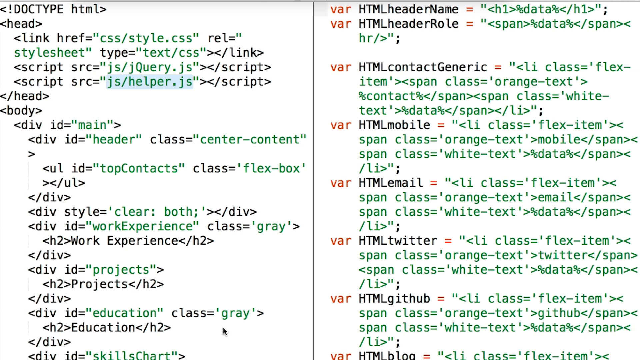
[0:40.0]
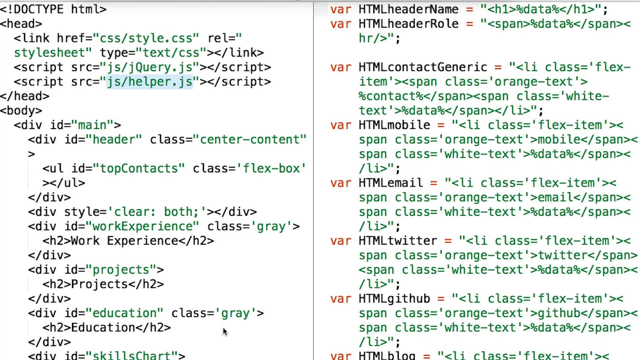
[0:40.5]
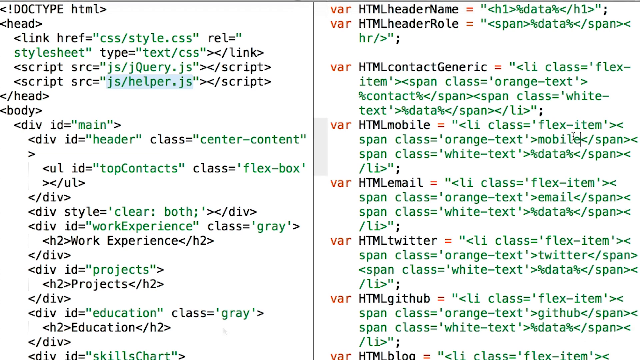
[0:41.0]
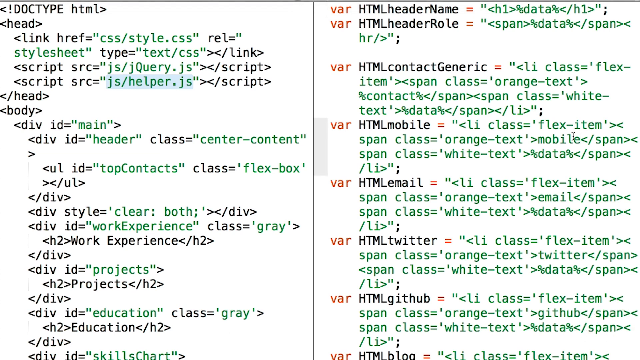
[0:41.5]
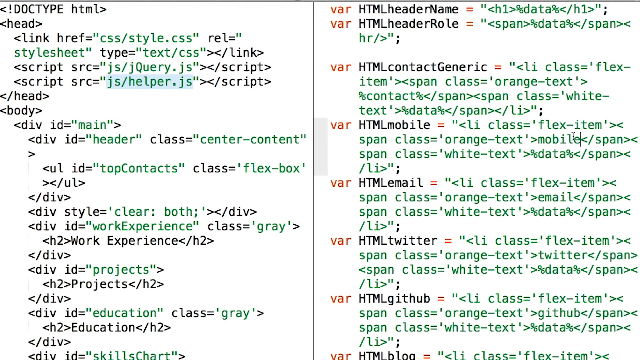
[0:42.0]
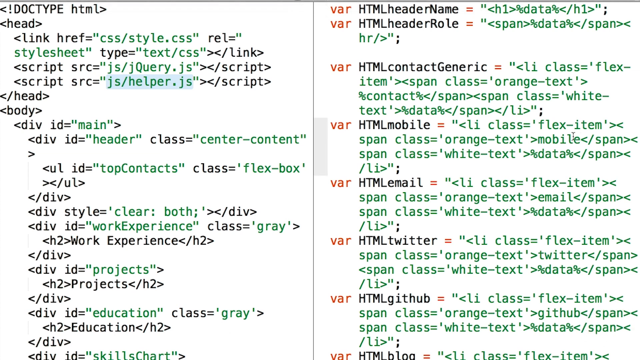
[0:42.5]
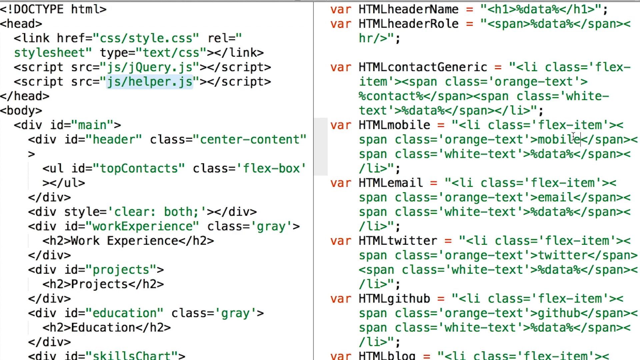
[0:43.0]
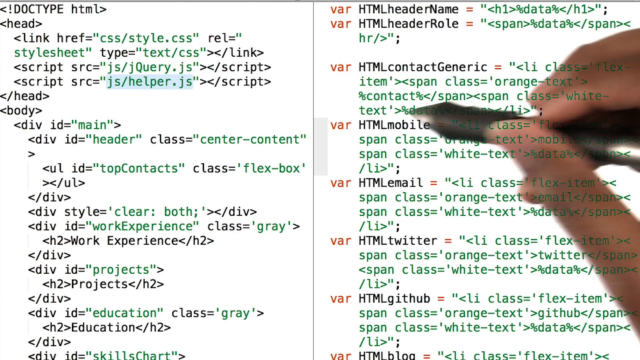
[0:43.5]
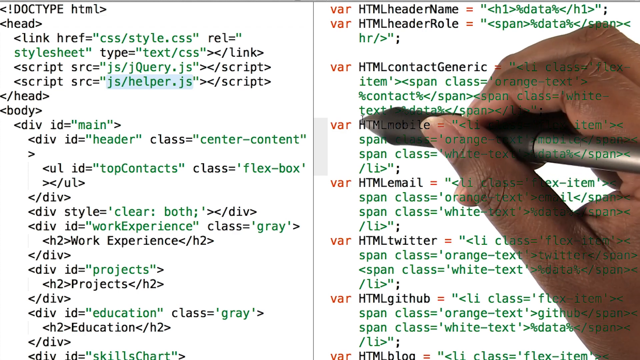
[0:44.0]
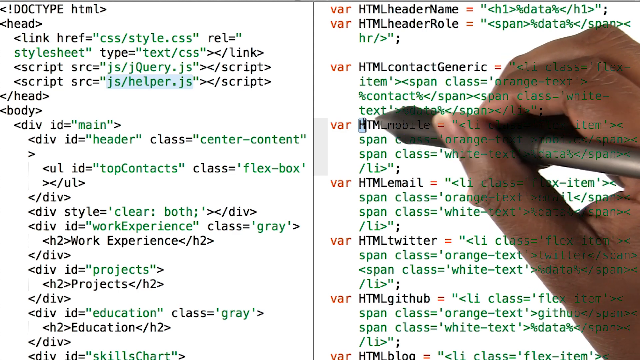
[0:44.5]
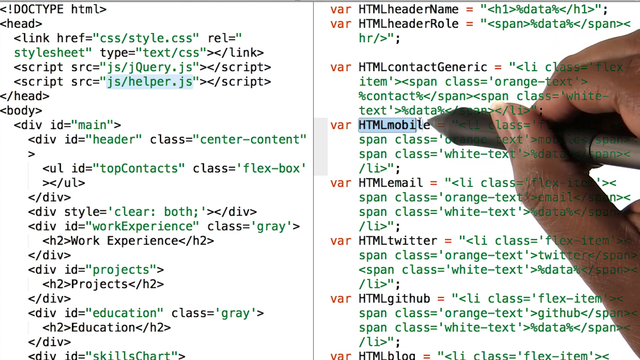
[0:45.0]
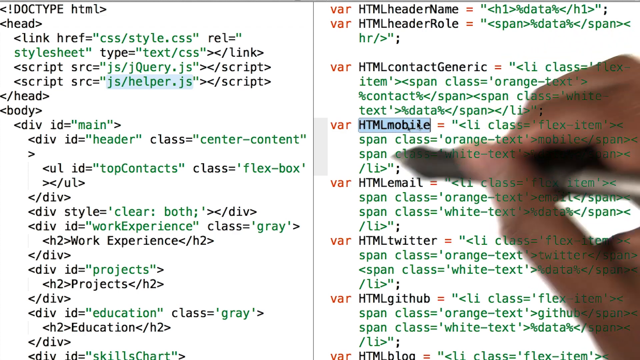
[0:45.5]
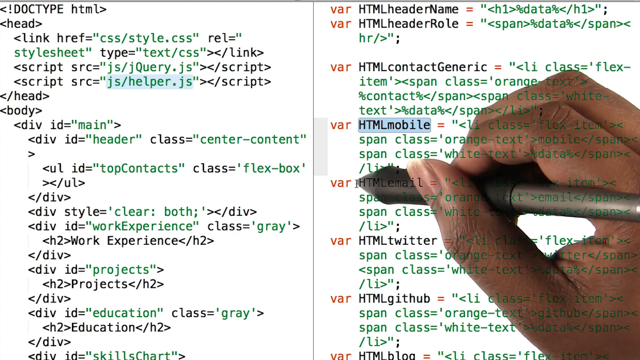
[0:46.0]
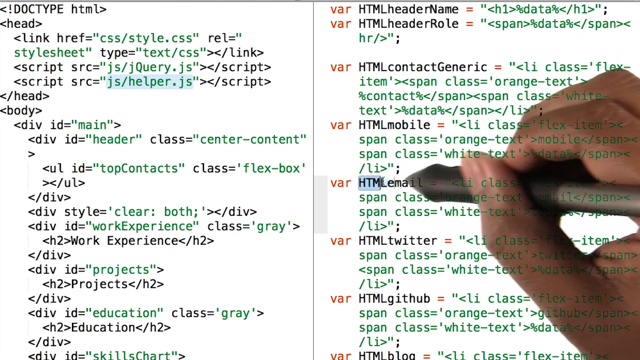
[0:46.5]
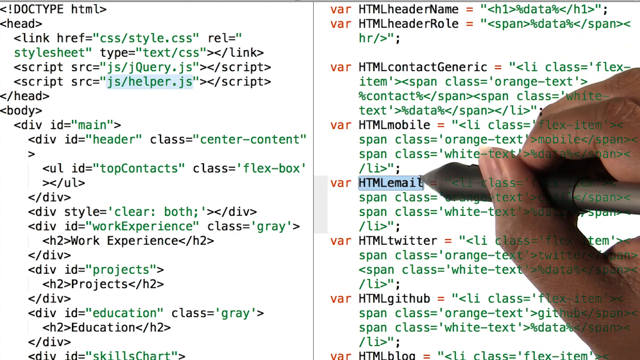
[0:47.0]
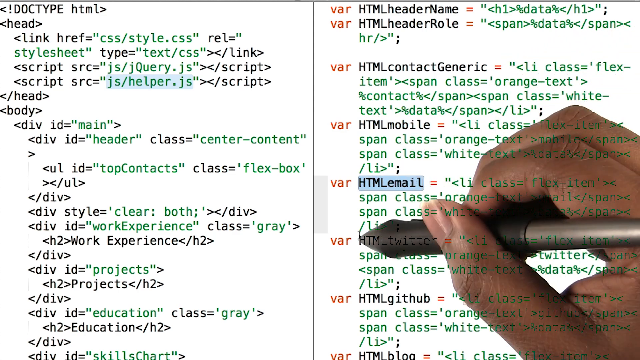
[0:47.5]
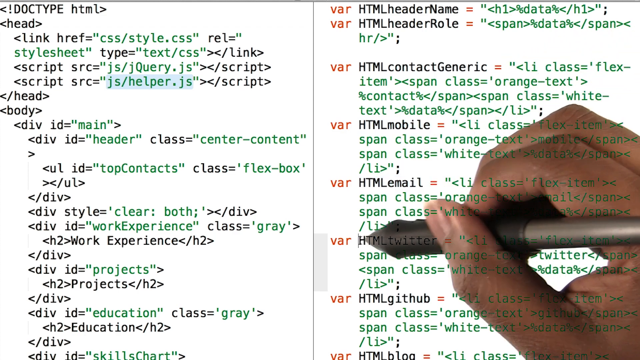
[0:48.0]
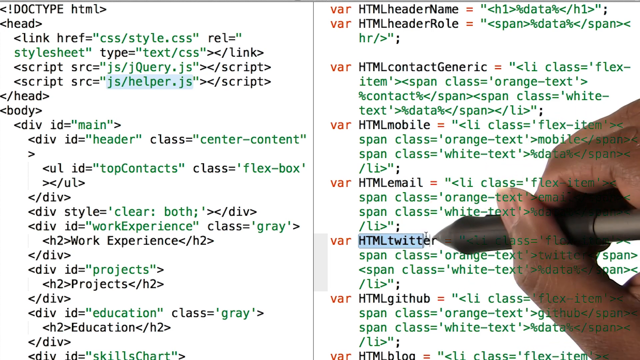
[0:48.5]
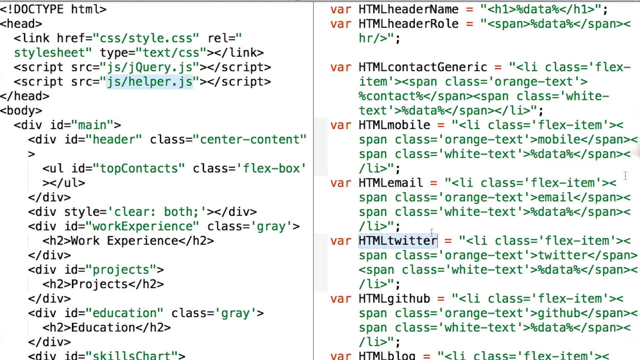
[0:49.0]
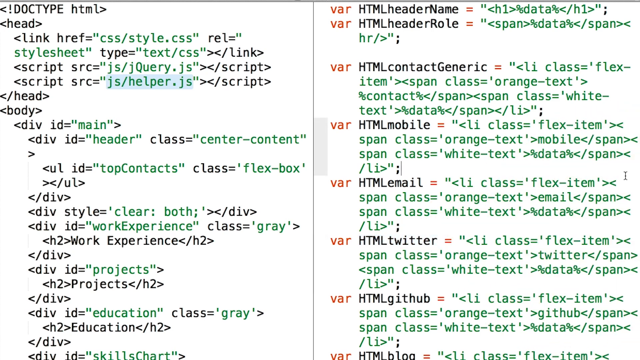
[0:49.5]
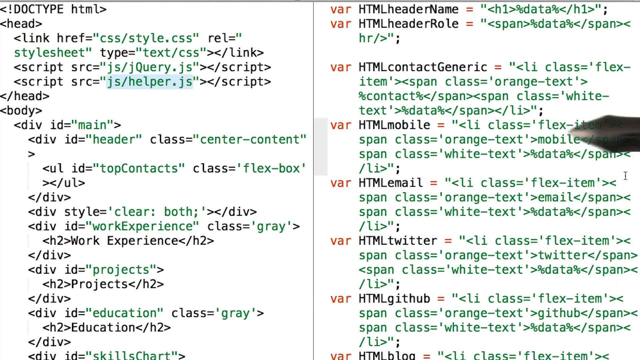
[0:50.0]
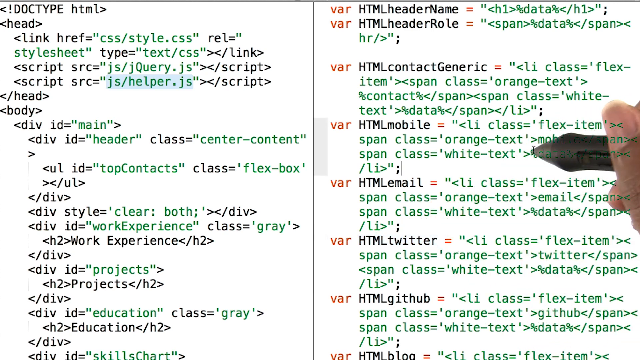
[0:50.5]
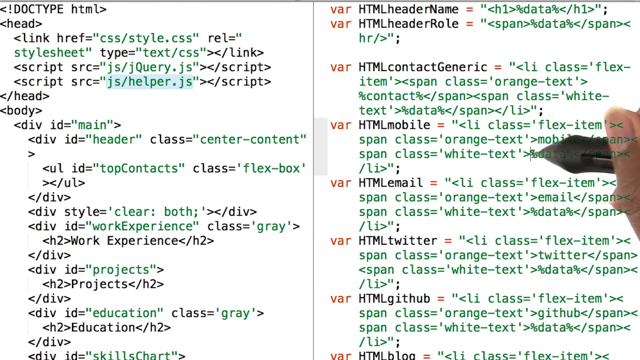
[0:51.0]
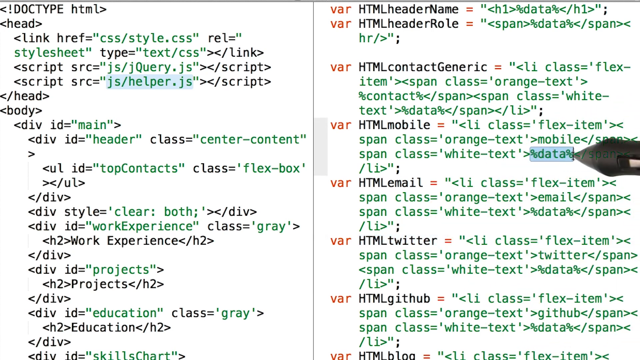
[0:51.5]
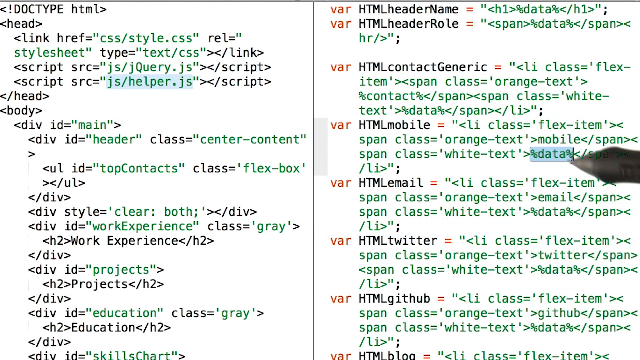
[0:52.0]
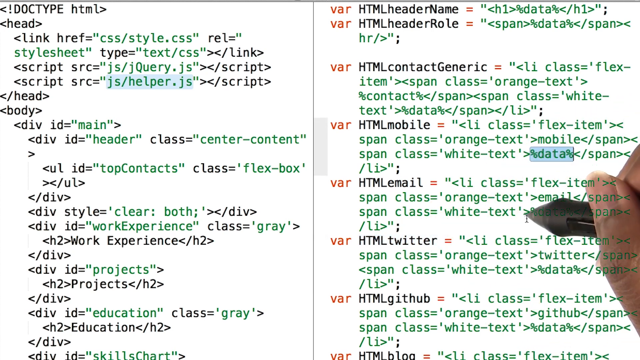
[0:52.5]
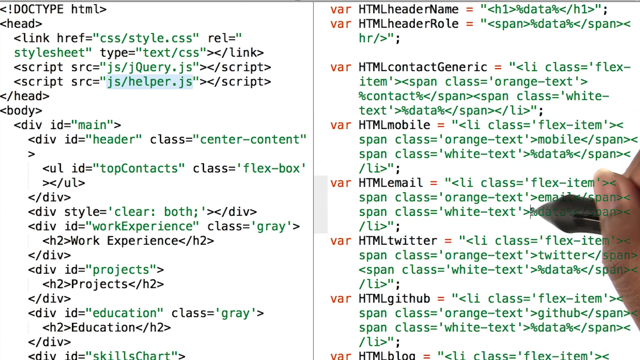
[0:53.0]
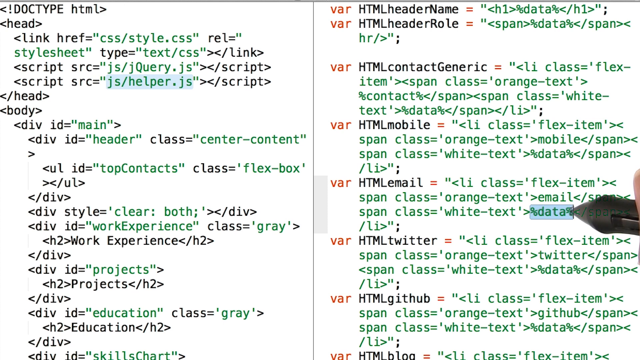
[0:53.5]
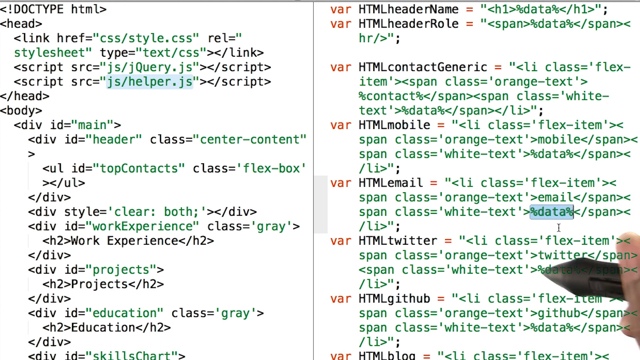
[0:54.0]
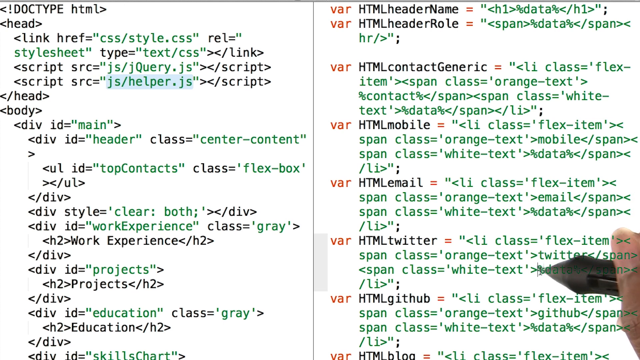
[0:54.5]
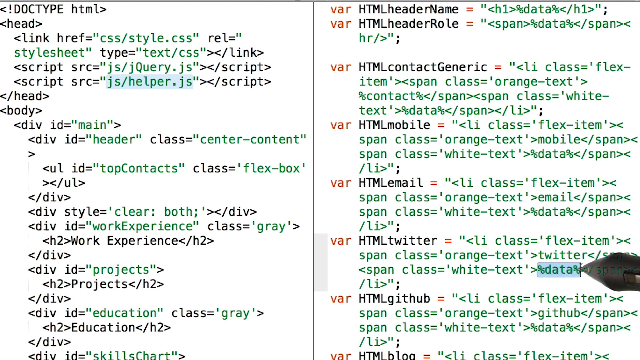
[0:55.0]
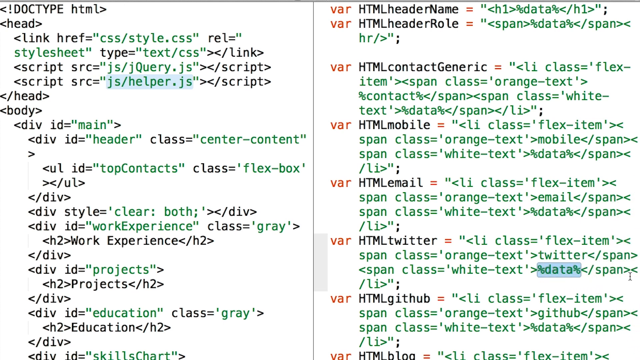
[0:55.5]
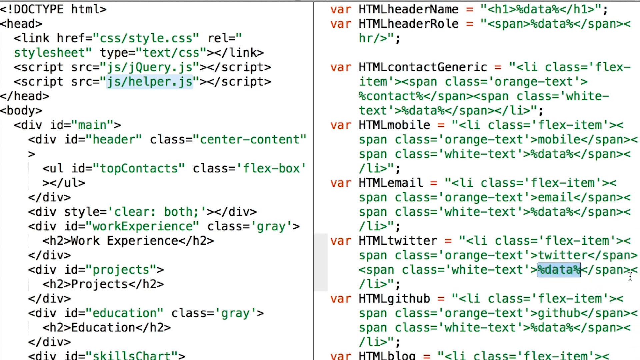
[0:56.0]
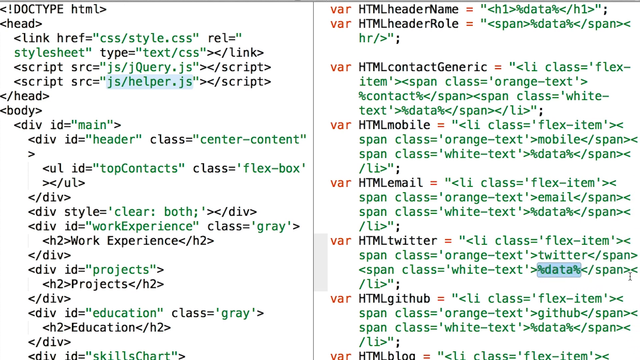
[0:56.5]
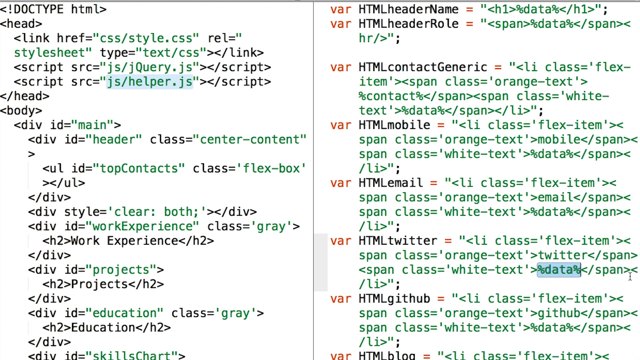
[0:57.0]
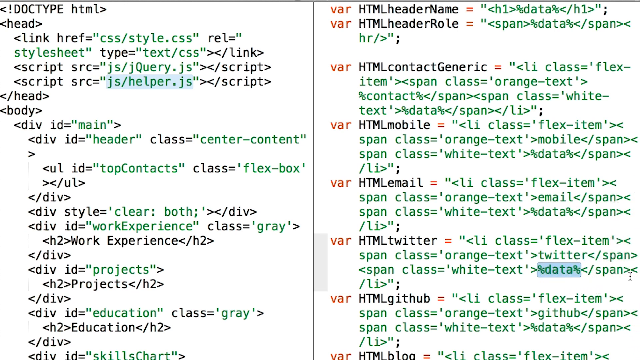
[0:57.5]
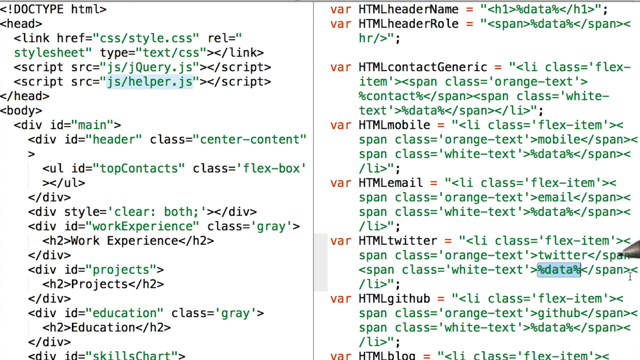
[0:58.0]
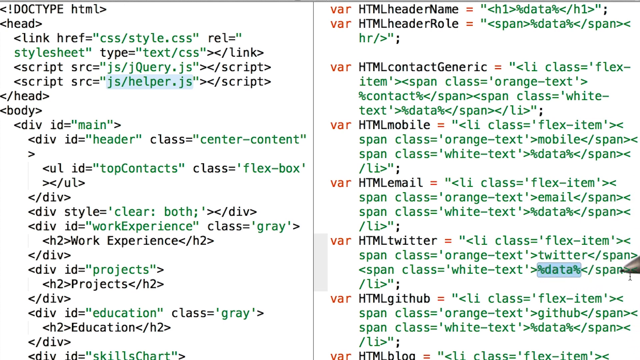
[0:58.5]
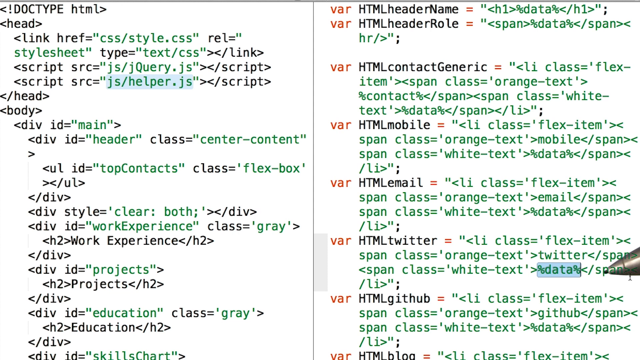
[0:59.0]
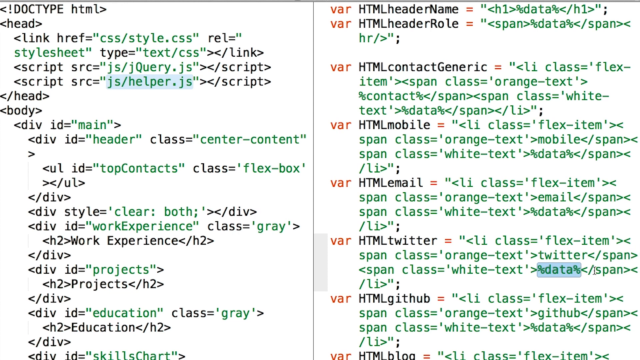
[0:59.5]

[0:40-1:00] The code remains on screen. The pointer marker comes back and moves from left to right, highlighting HTML mobile, HTML email and then HTML Twitter; each highlight removes the previous one, and nothing in the code changes. The marker then goes back up and highlights the last percent data in the code for mobile, then email, then Twitter.